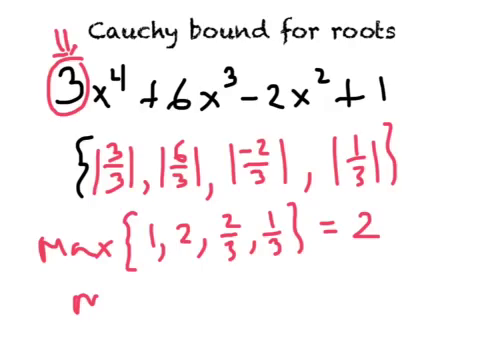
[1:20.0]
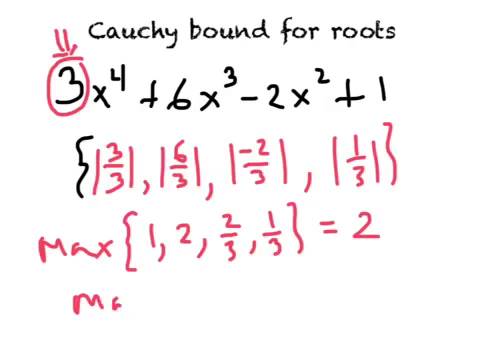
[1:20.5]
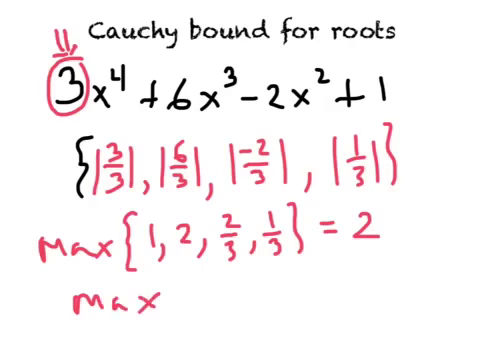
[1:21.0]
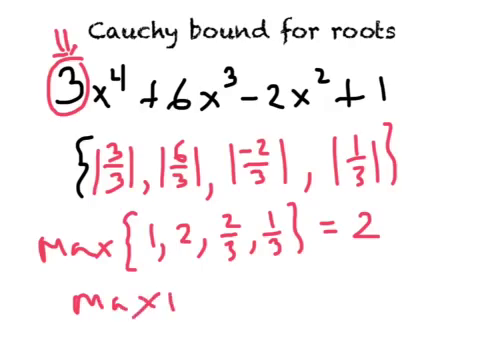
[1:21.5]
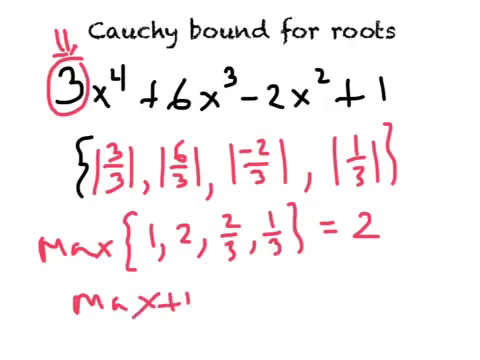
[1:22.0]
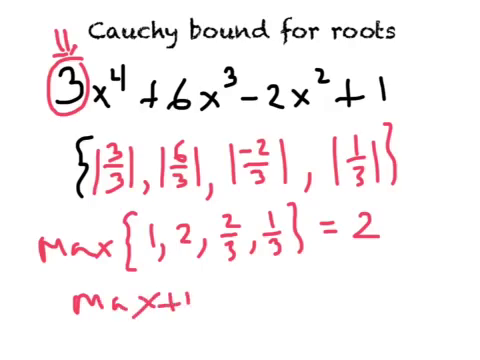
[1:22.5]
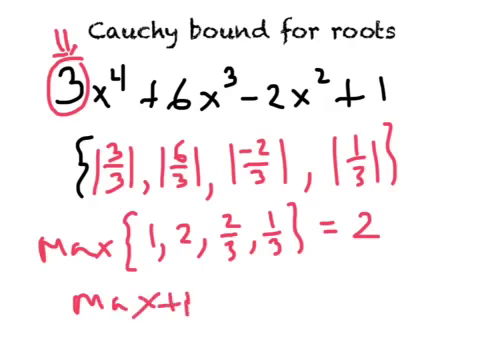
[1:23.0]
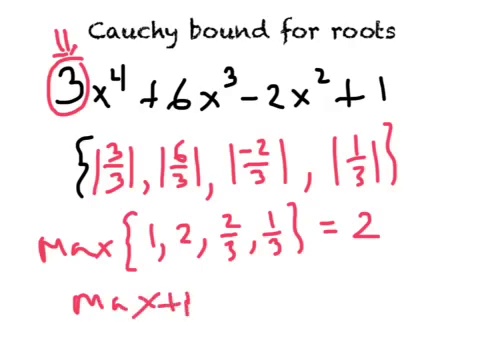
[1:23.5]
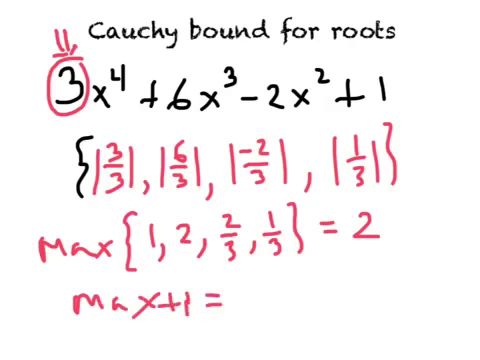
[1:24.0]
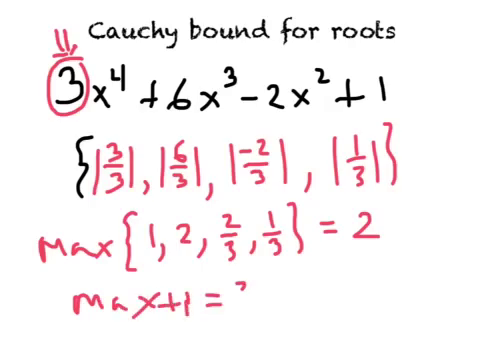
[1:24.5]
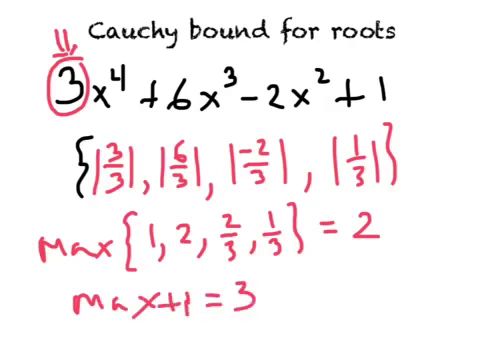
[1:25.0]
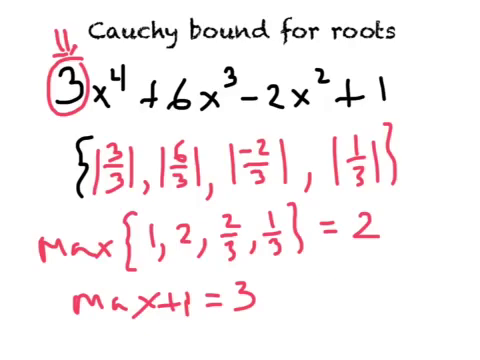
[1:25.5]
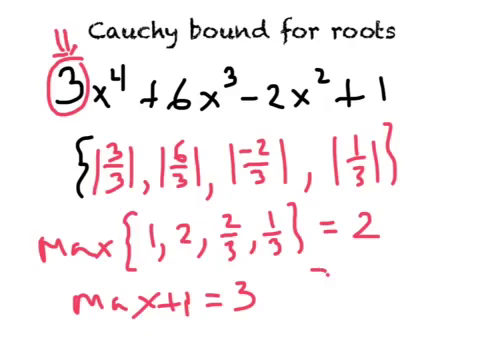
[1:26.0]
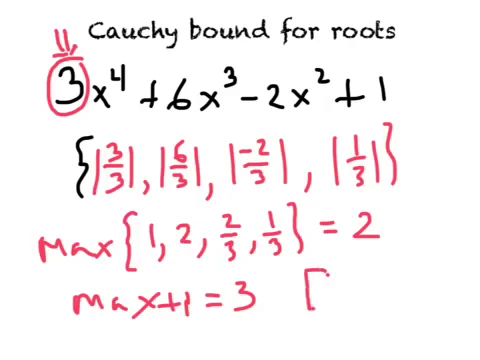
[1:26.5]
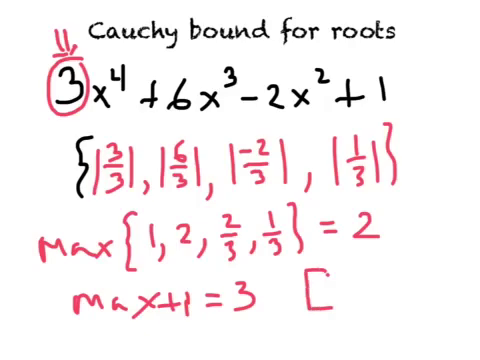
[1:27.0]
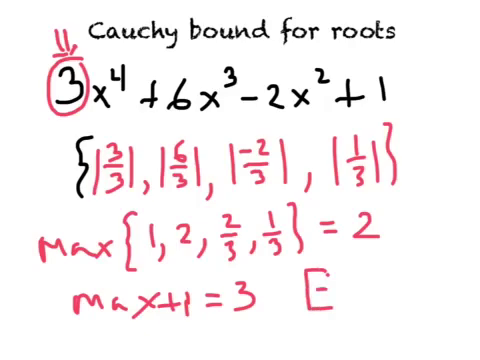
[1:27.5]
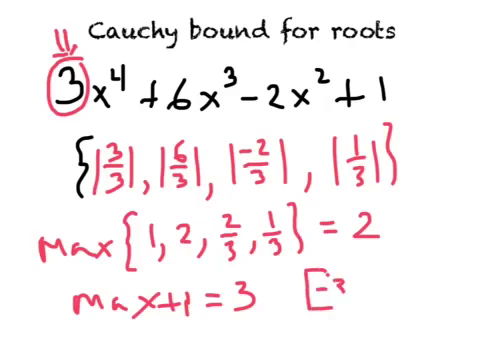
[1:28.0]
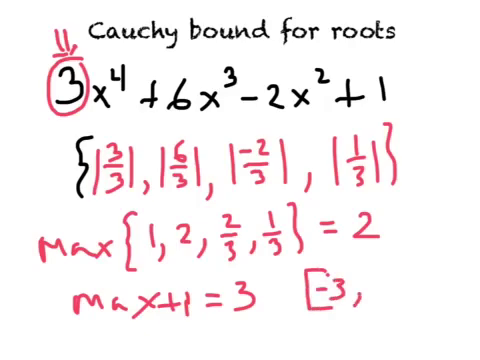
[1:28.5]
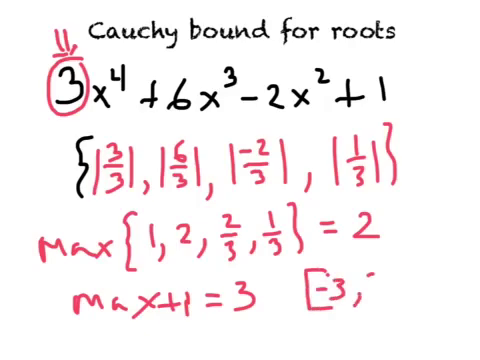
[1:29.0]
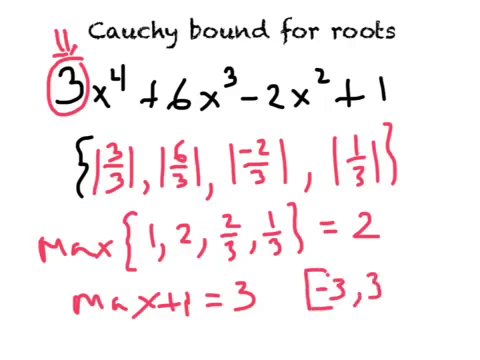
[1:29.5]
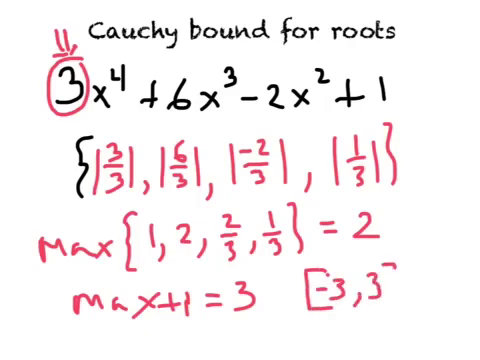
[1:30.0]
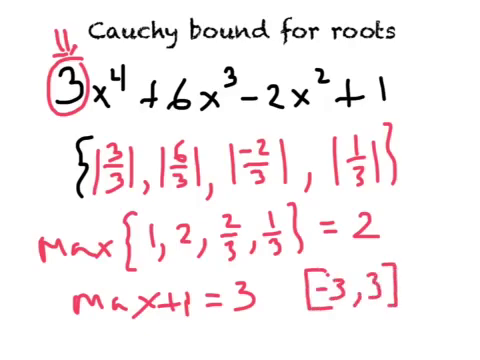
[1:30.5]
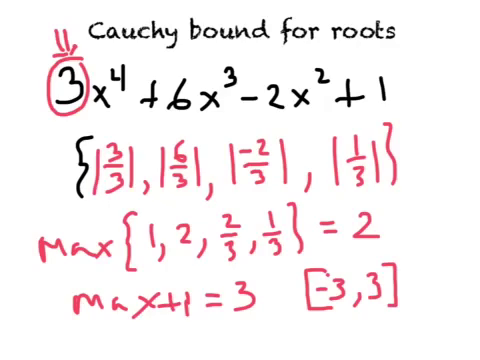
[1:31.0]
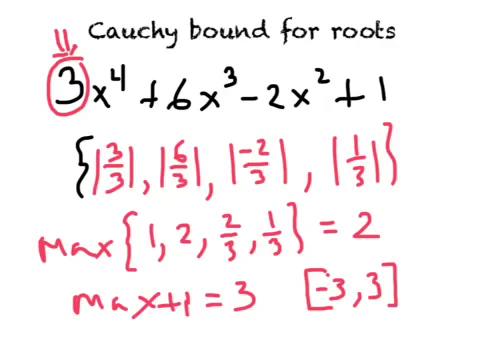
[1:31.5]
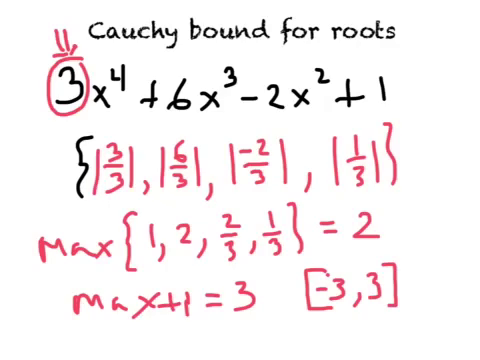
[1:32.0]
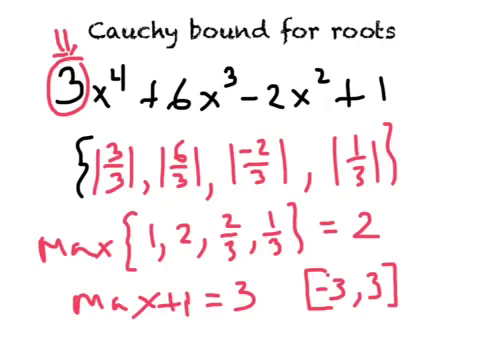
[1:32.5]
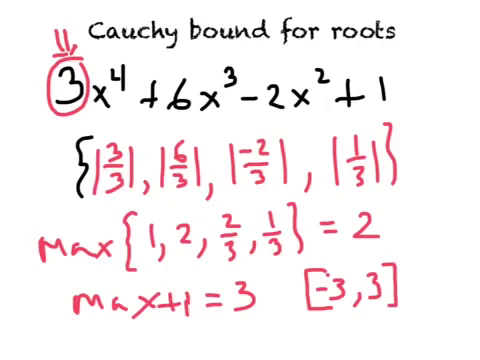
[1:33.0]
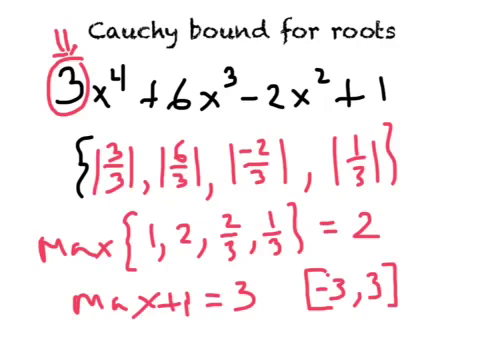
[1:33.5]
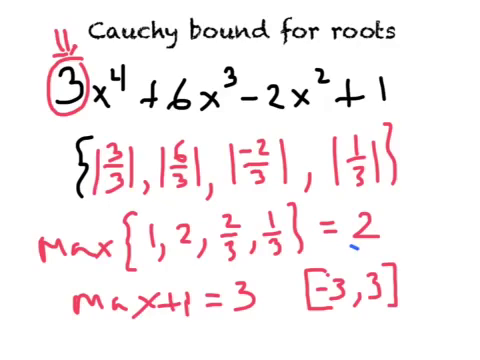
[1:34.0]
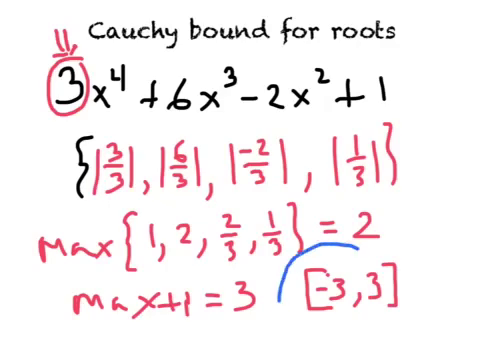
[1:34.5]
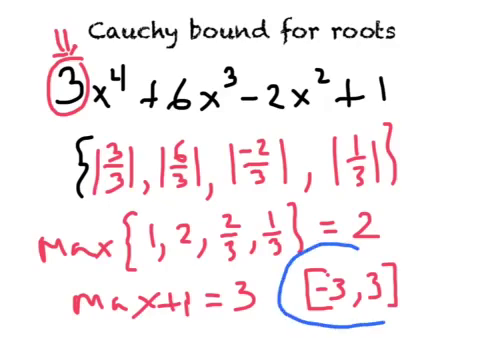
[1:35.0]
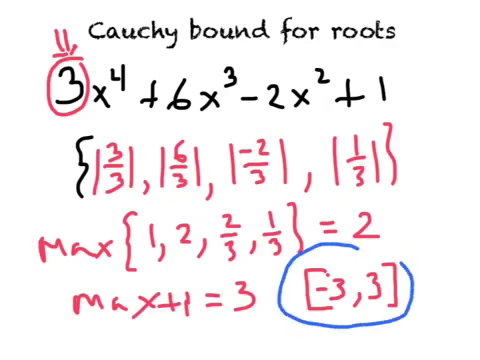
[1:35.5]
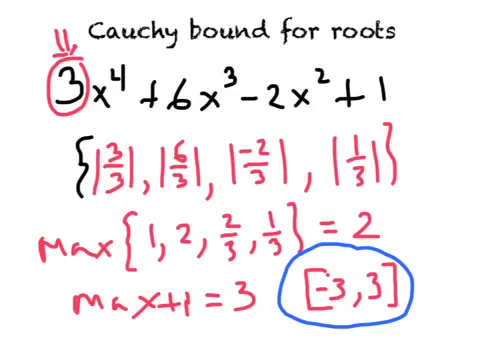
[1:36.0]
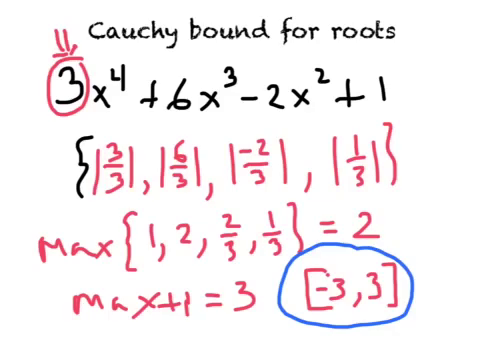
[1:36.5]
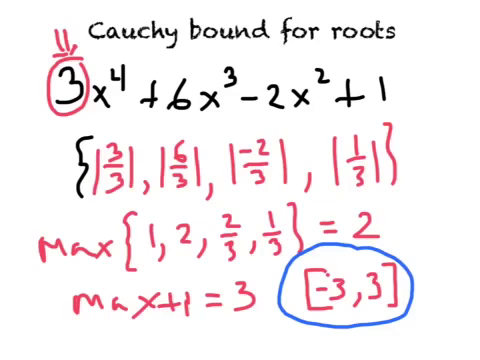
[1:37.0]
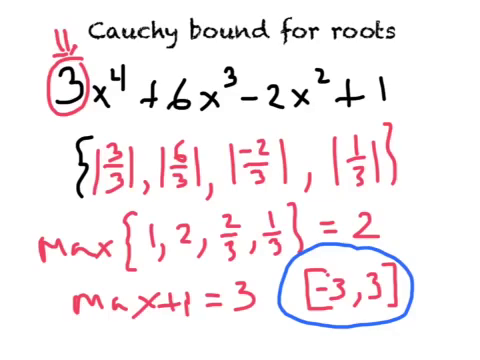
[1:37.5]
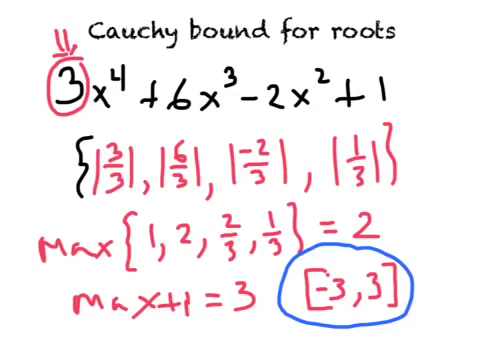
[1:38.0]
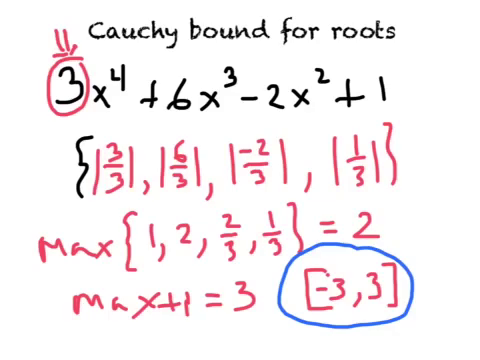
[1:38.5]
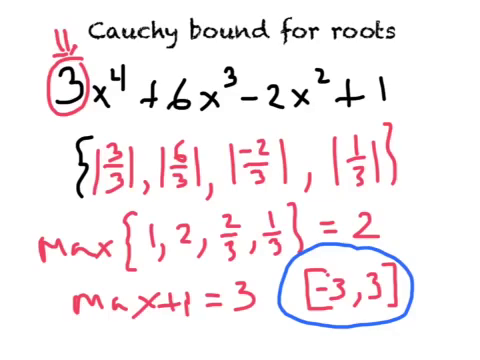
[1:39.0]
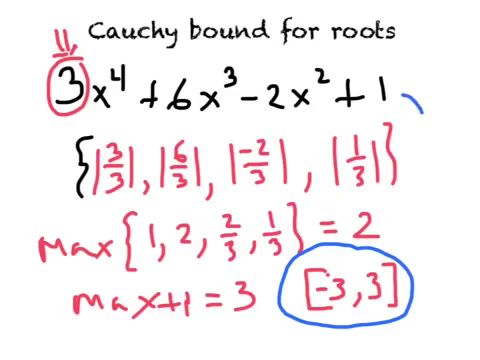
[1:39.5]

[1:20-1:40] The formula and the line of absolute values are on the page. On the line below, "max" is written in red with a curly brace, followed by the numbers 1, 2, 2/3, 1/3, a closing curly brace, and equals 2. On the next line, max plus 1 equals 3 is written, followed by a bracketed −3, 3. A blue circle is drawn around the bracketed −3, 3, and parentheses are drawn around the third and fourth lines of the equation. Three colors are now in use: black, red and blue.